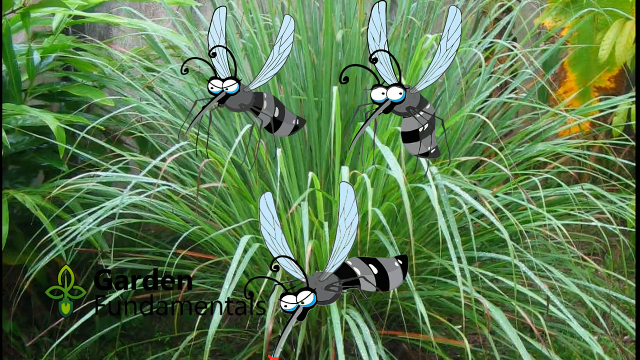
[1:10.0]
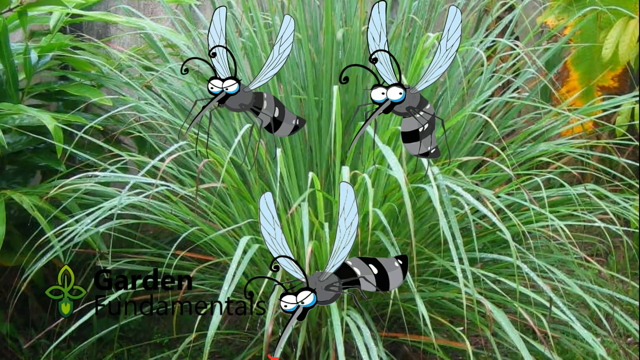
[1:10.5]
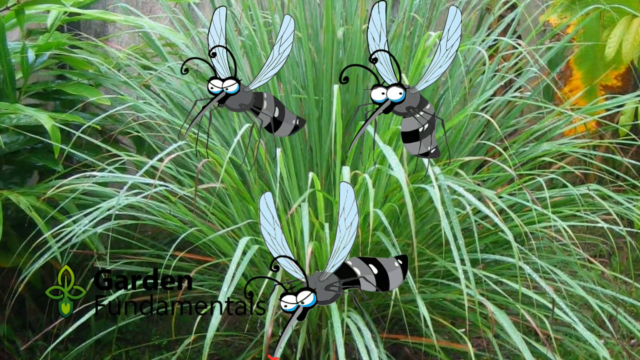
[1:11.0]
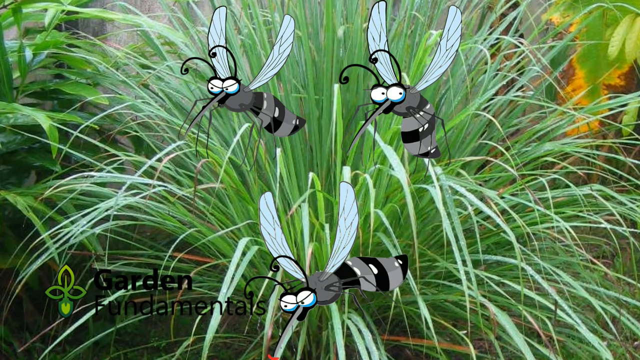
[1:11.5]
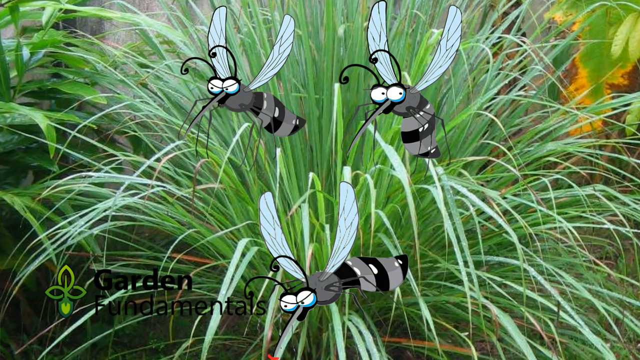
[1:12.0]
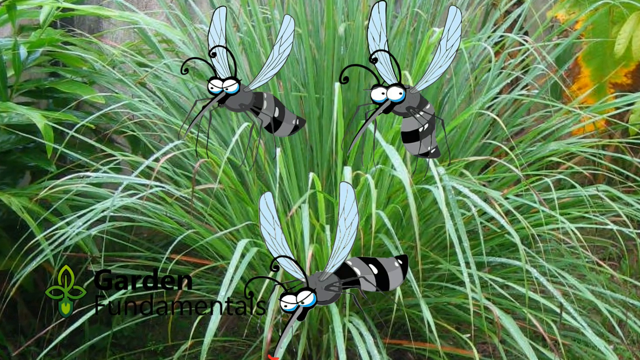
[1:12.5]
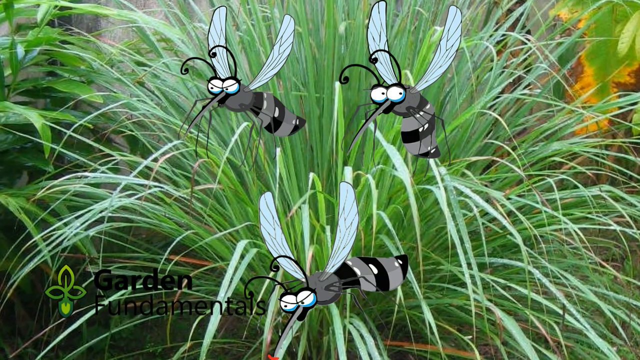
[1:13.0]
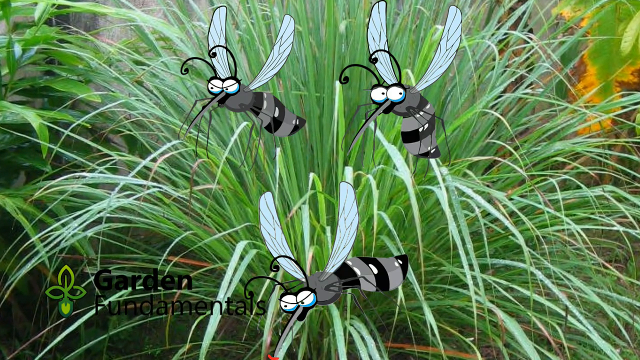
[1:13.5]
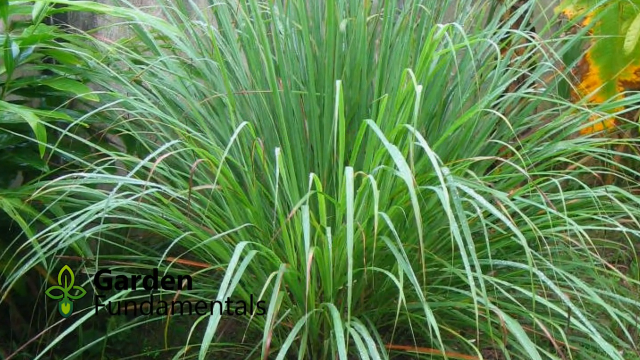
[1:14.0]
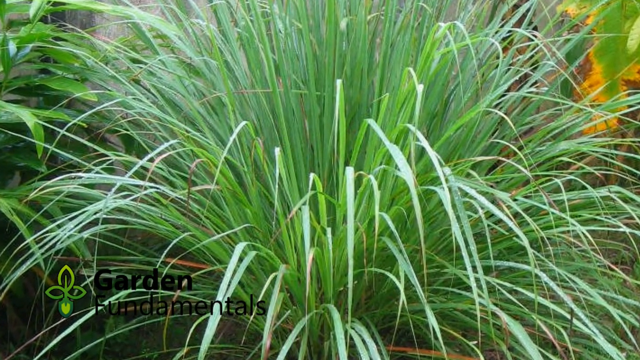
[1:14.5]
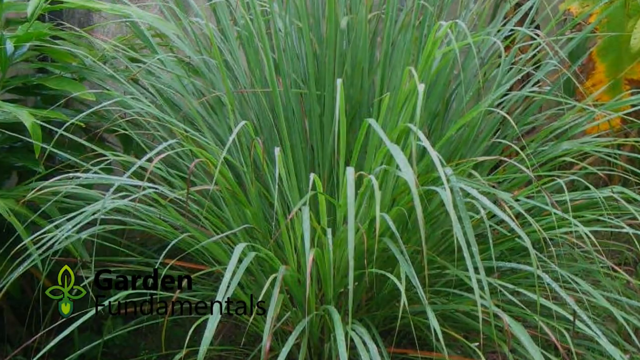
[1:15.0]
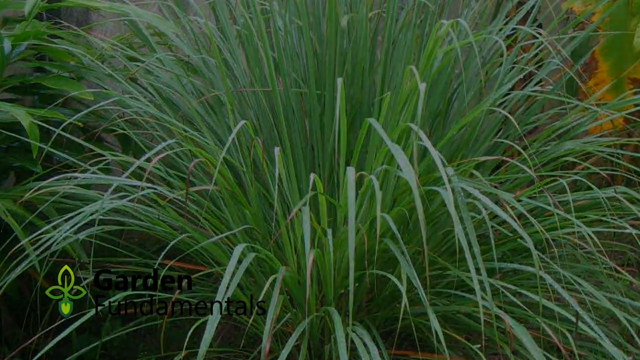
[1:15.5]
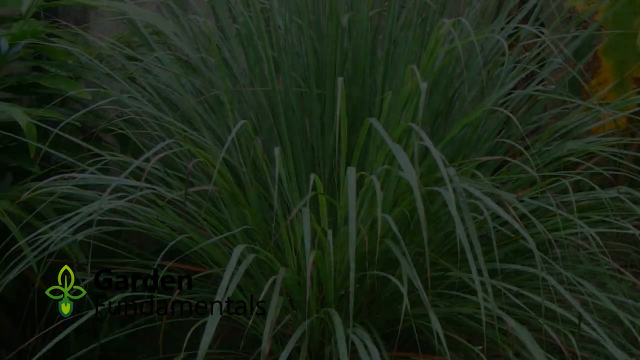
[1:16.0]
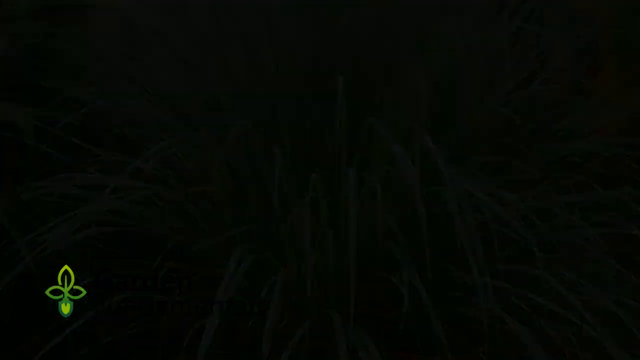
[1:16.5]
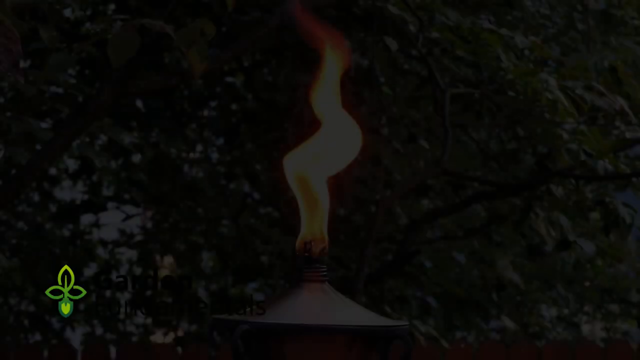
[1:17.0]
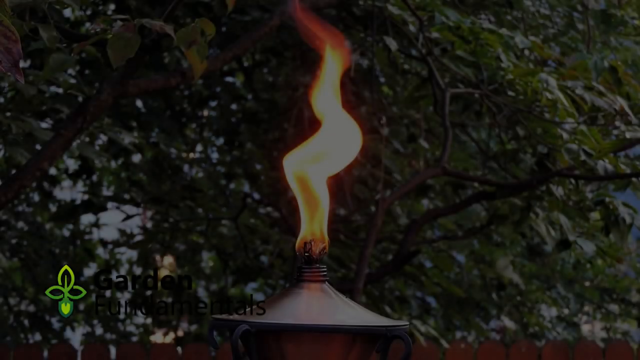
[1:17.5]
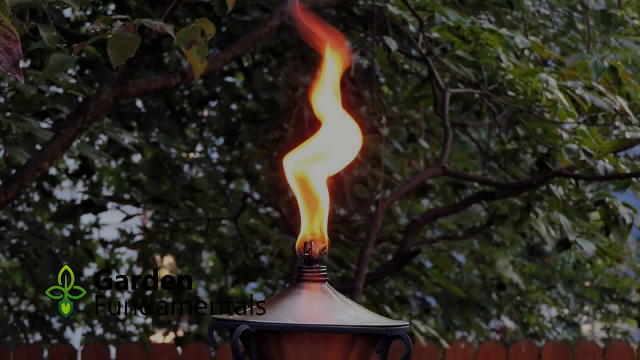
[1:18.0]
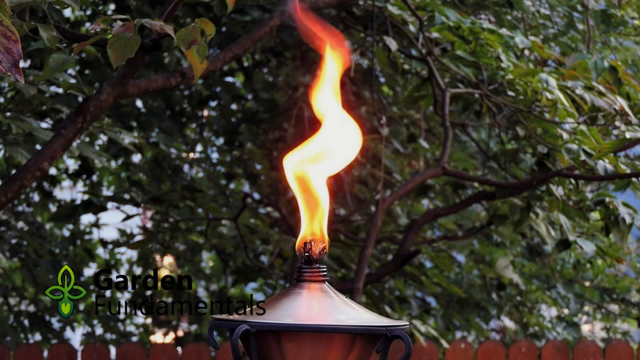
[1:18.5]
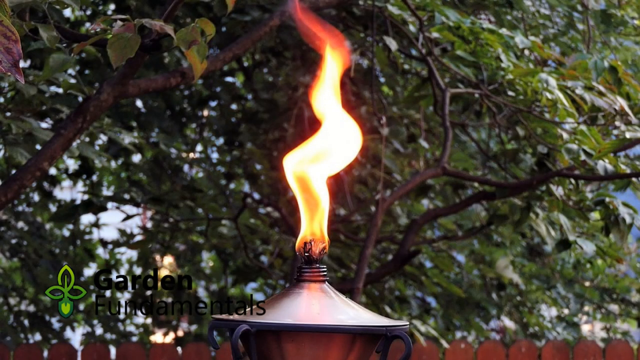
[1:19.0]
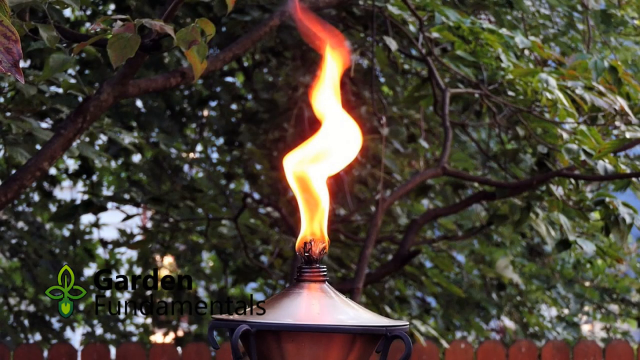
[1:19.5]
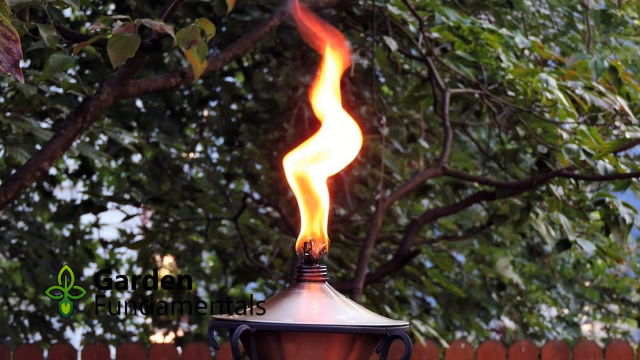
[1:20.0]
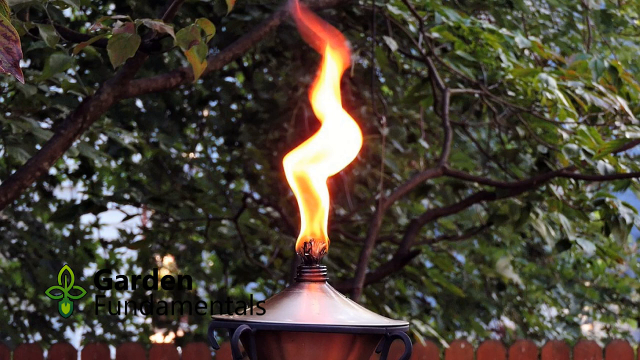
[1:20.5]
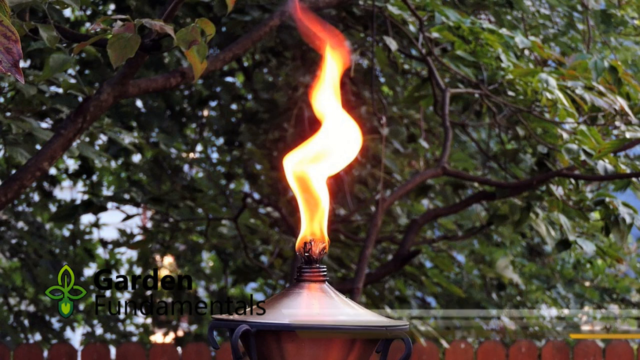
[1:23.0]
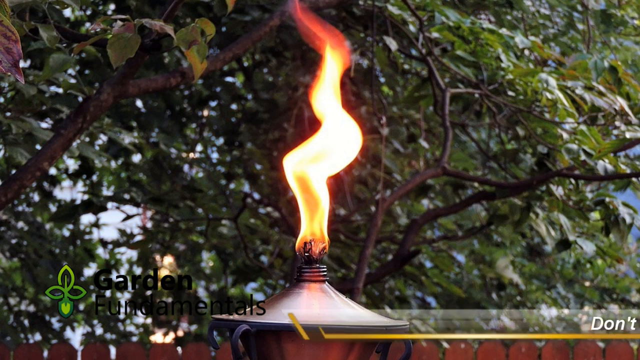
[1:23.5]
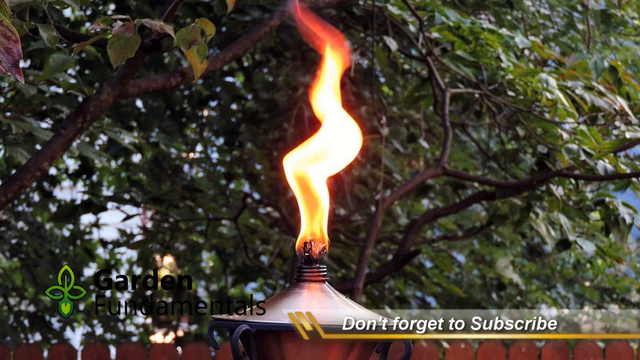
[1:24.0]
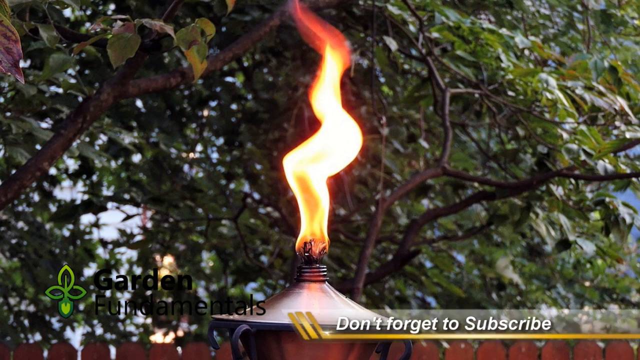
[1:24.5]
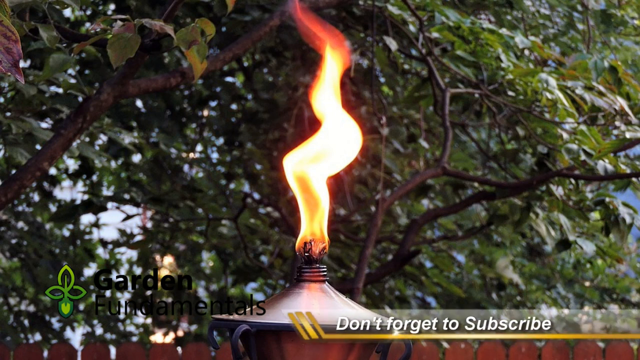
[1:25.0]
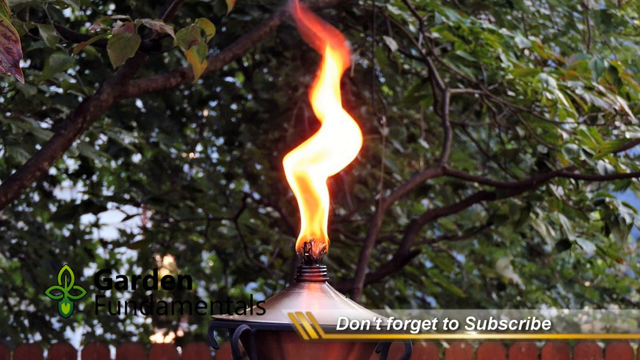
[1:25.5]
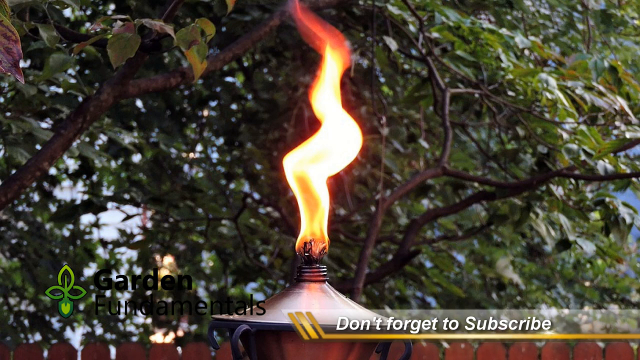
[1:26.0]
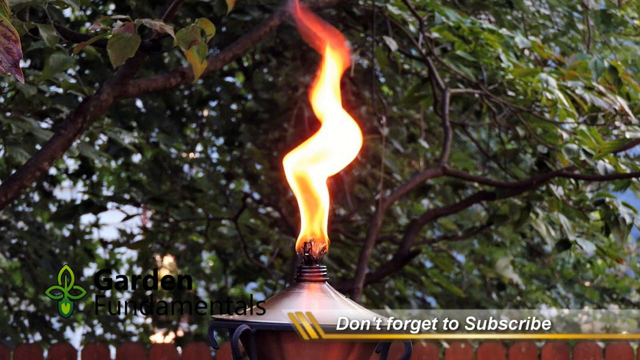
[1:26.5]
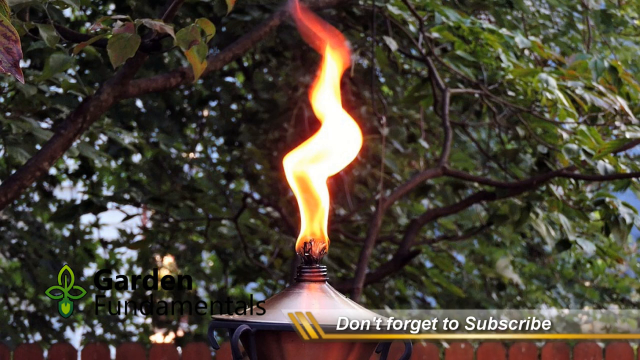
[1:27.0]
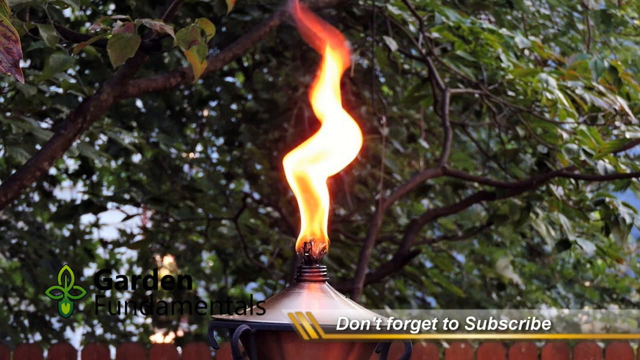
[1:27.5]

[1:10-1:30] Three cartoon mosquitoes with kind of cartoony eyes are in front of the lemongrass image, two on top and one on the bottom that looks kind of angry. They have skinny wings, black and gray stripes, and two antennae. The view keeps zooming into the lemongrass picture behind them; the mosquitoes do not move, then disappear, and the lemongrass picture fades to black. A new scene appears: a picture of what looks like a candle burning, apparently under some trees. A little pop-up at the bottom reads "don't forget to subscribe". The close-up shows a kind of big flame that looks like it could be the top of a tiki torch, burning pretty bright and pretty tall.